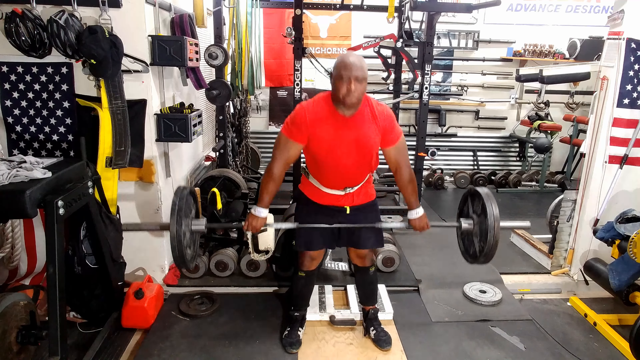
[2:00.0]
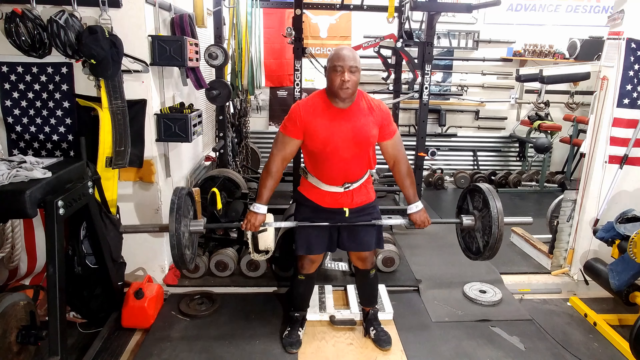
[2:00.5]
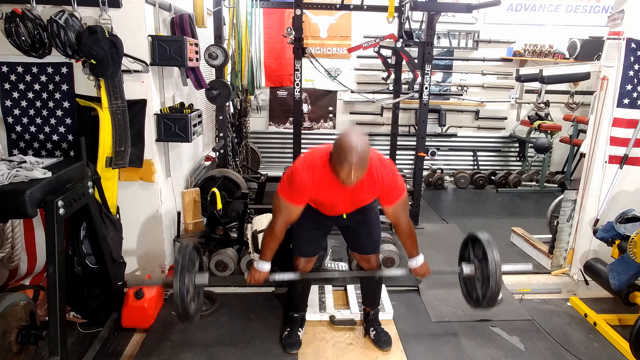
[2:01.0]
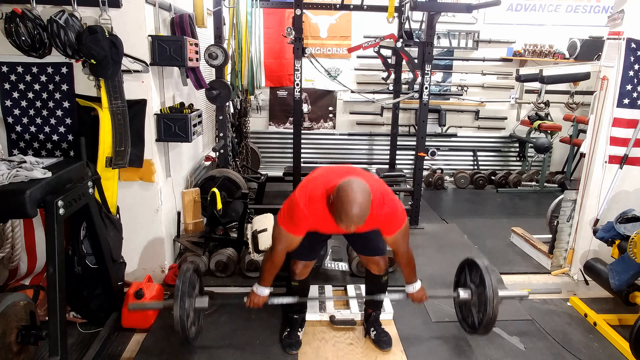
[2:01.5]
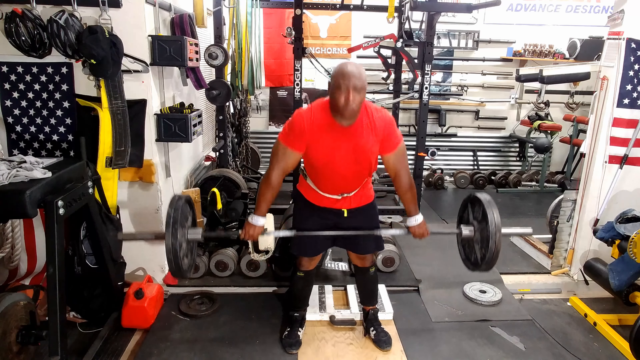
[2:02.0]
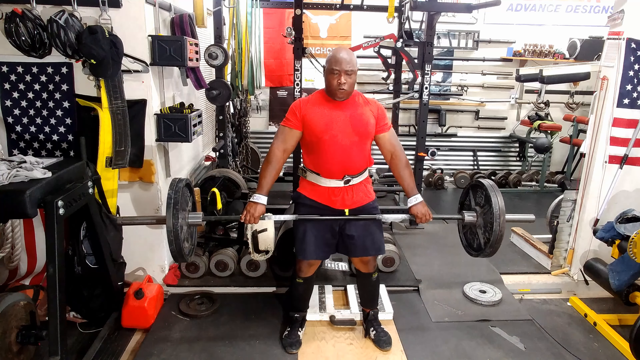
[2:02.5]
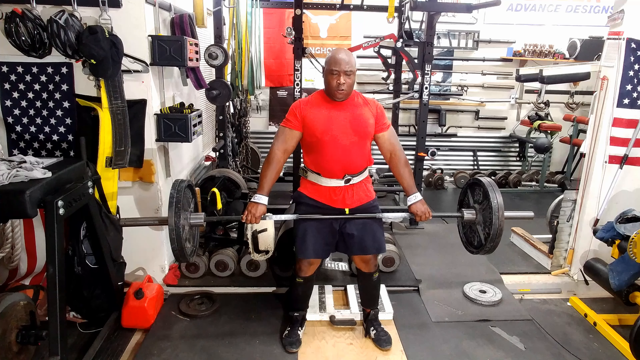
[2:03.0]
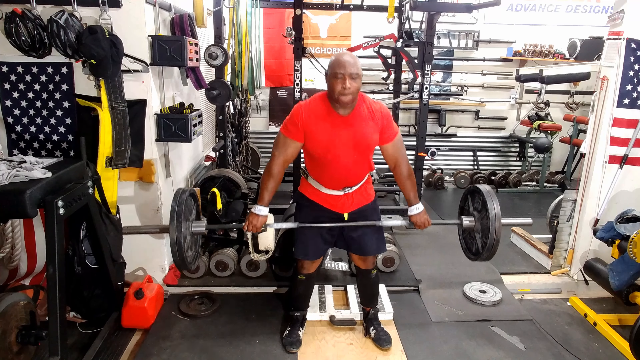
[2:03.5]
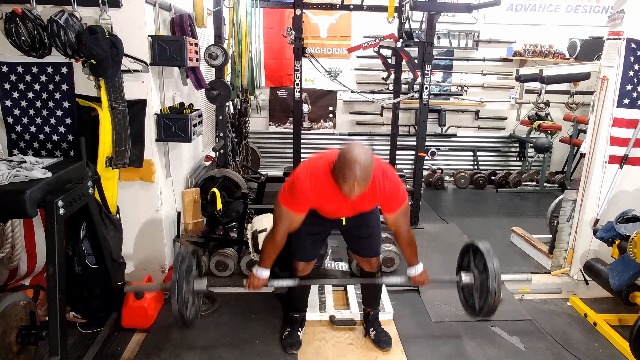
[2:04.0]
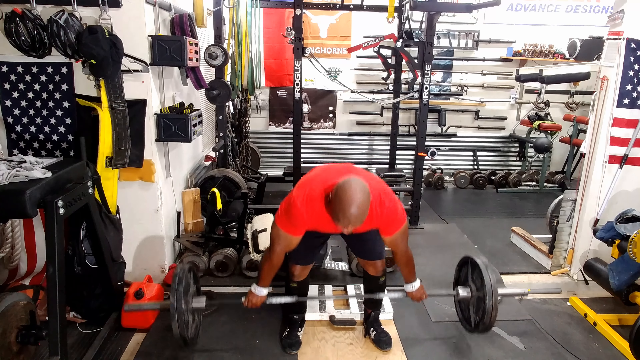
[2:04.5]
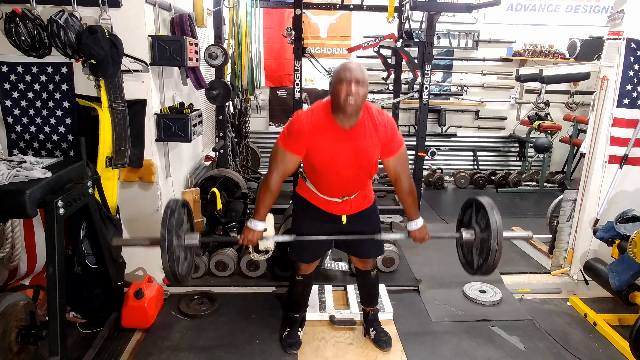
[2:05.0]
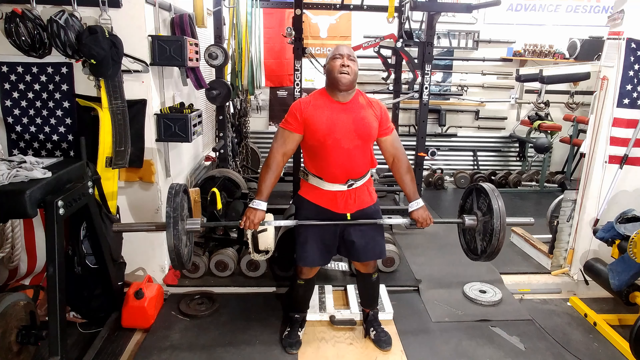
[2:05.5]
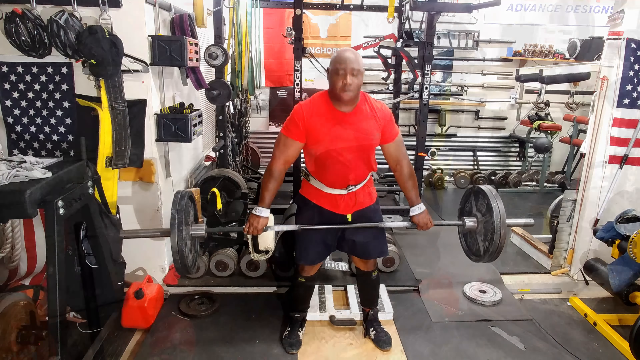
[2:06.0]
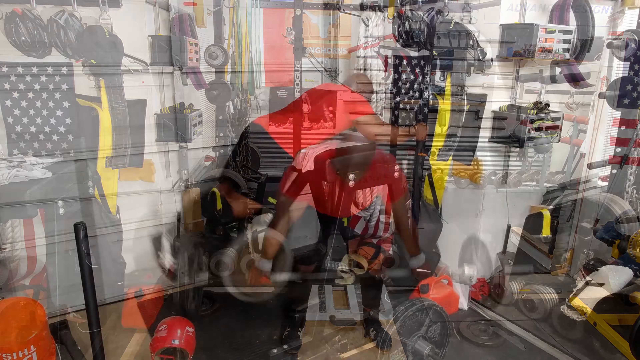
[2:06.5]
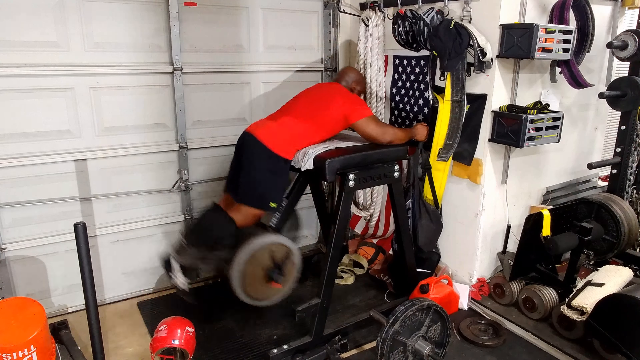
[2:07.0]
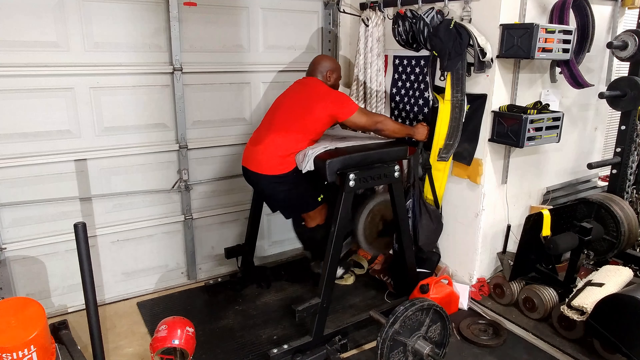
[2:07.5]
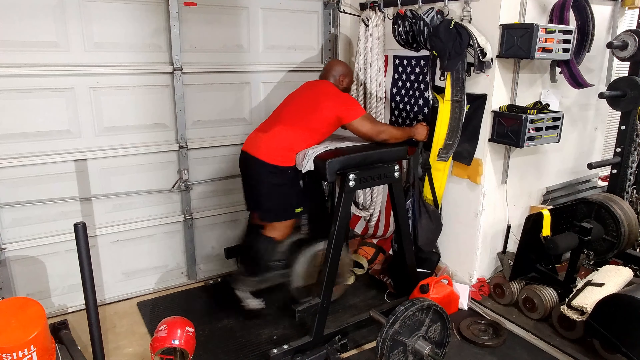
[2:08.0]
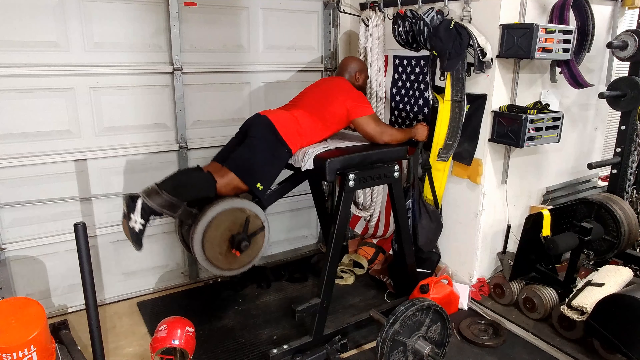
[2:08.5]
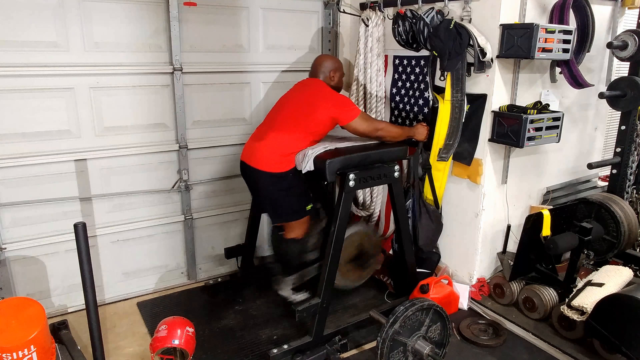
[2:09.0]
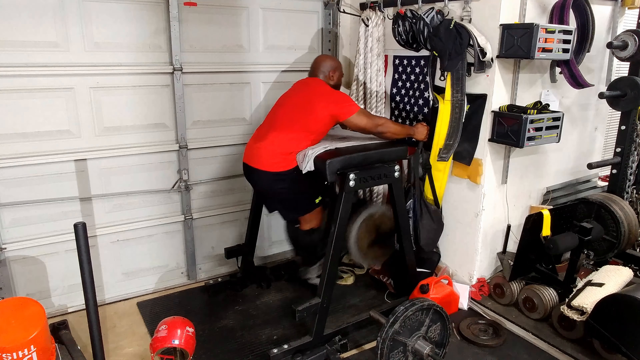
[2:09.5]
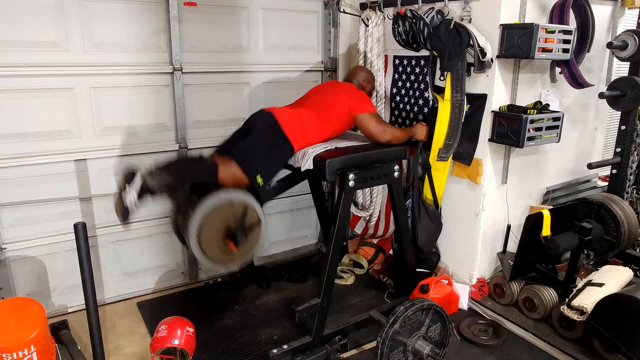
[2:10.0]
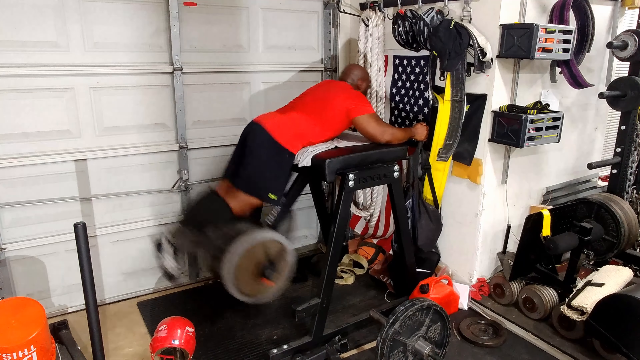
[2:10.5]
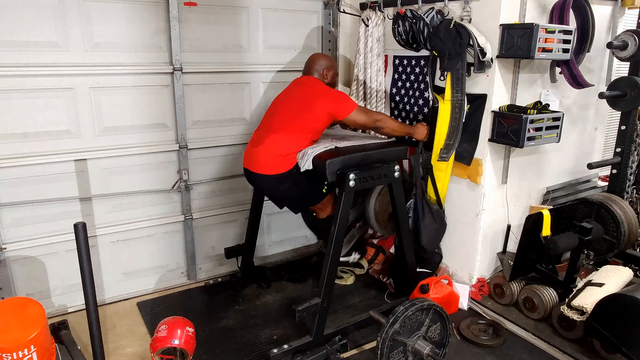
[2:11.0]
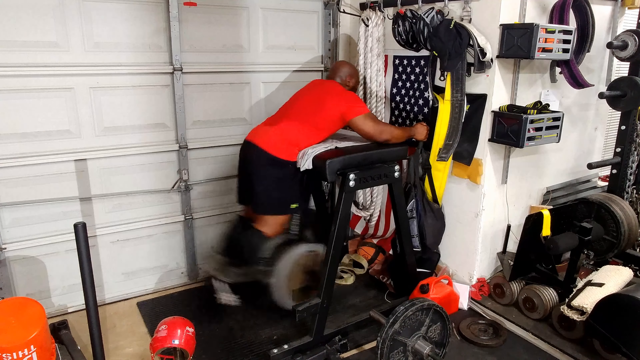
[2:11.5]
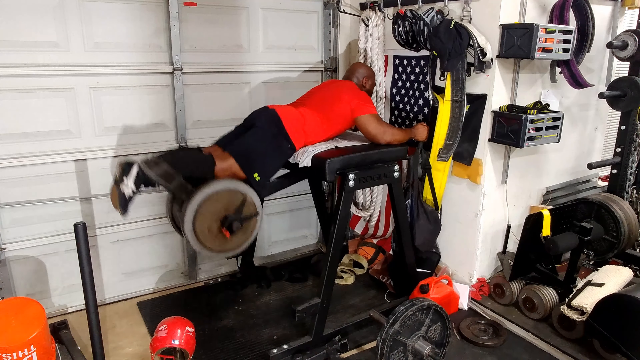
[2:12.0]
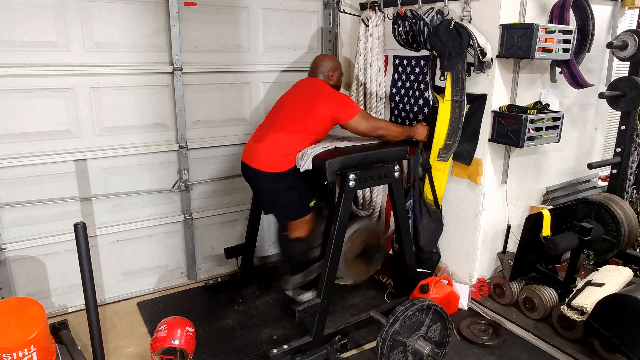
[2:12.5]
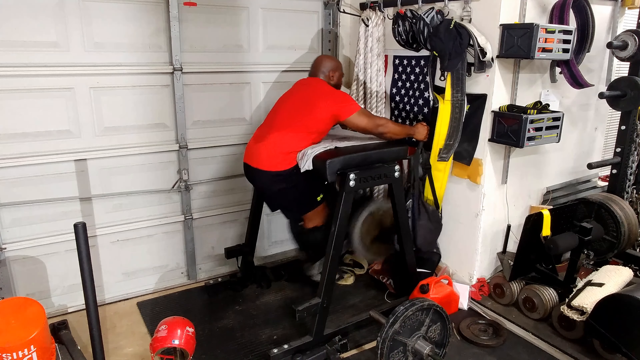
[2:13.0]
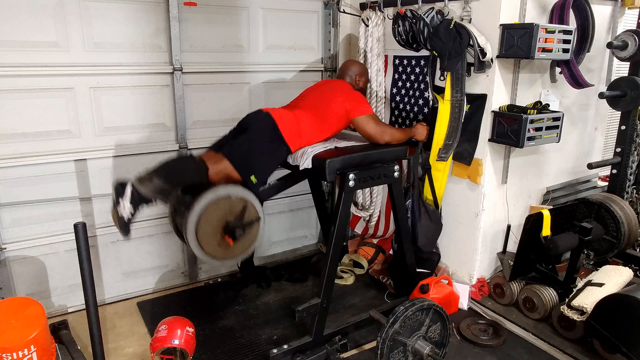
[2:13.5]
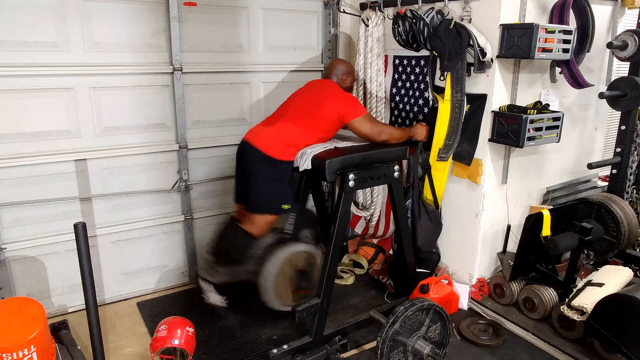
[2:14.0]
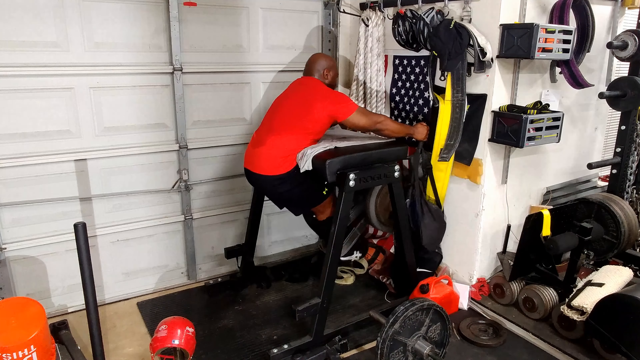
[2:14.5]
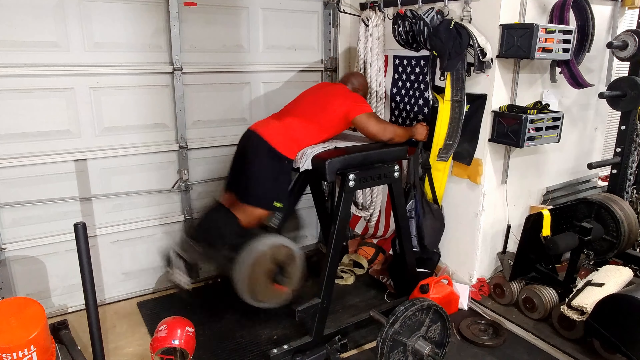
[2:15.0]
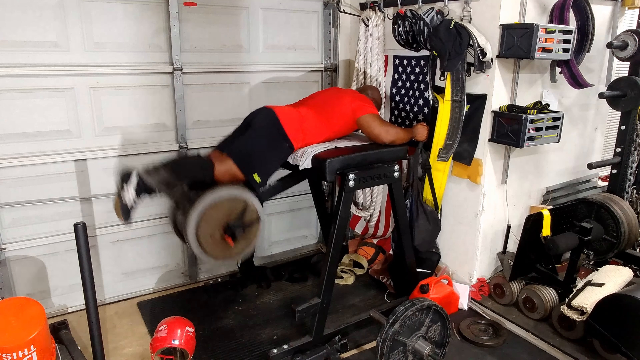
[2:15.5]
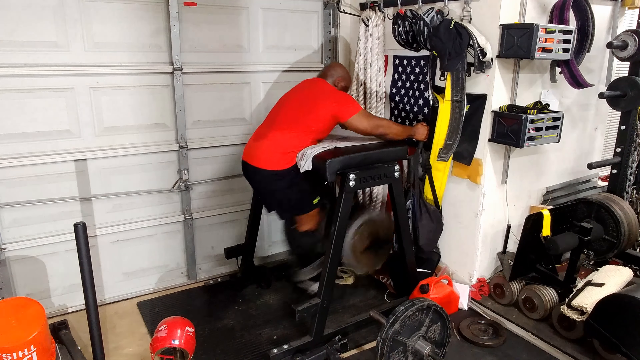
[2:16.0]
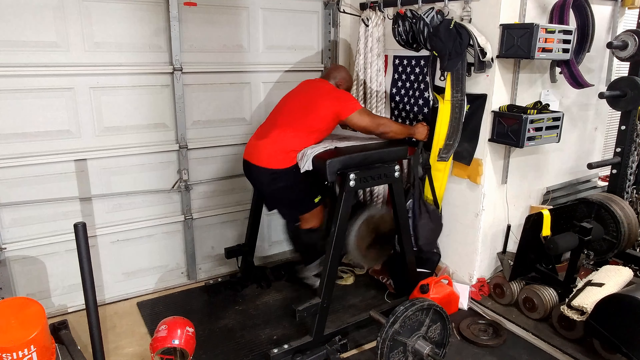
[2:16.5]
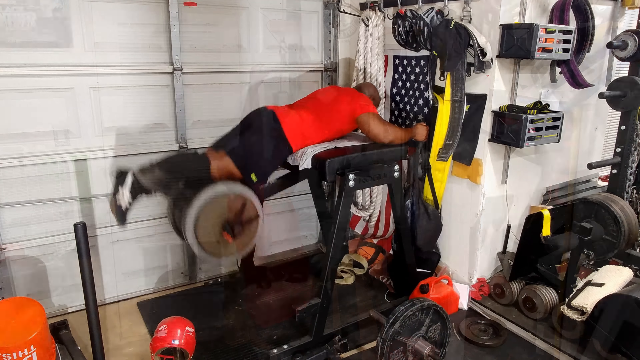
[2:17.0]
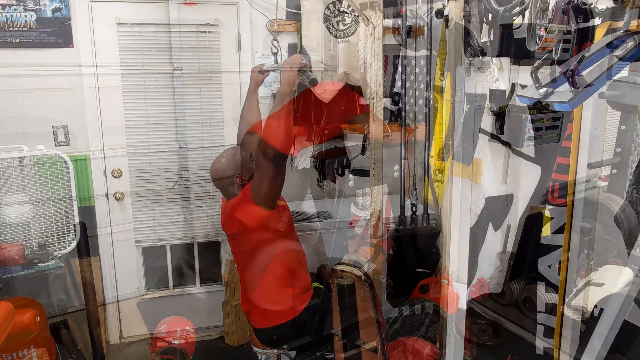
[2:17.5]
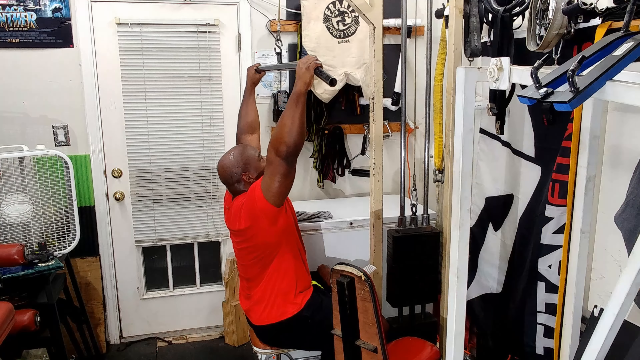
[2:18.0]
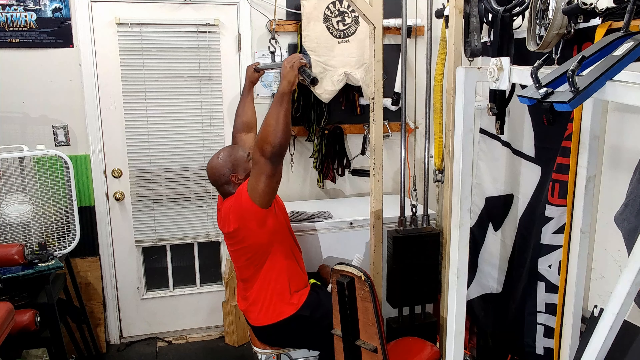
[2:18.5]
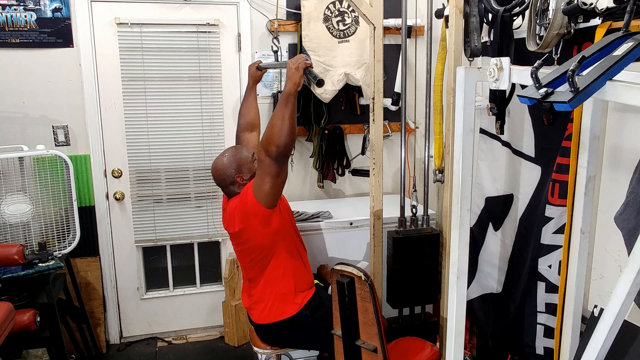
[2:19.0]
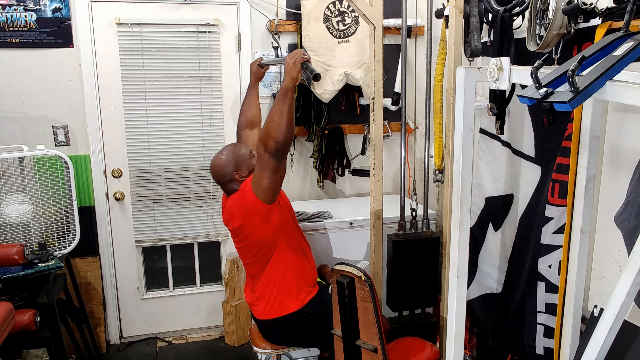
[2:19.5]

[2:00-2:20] The bar reaches the man's waist, and the camera fades to another workout in which he works his legs. The machine is almost like a table, with his upper body laid flat against it, and he holds on to what seem to be handlebars or grips. He swings his legs back and forth over the edge of the table with weights at the end, with a lot of force. The video then cuts to another angle where he reaches his arms up toward a handlebar grip and begins to pull down, but the video fades away before much of this workout is shown.